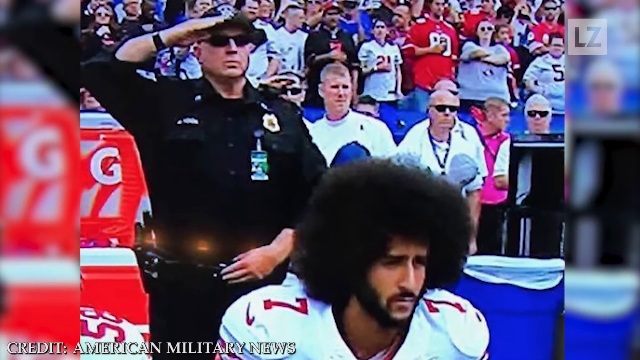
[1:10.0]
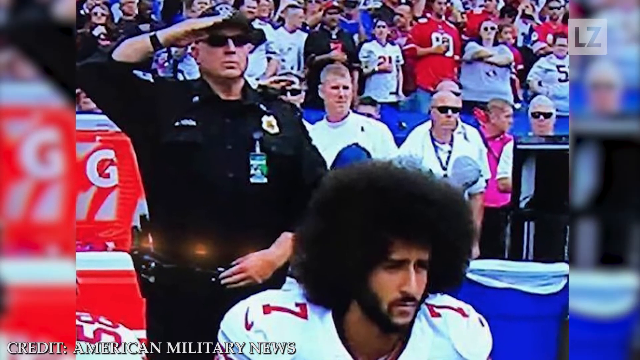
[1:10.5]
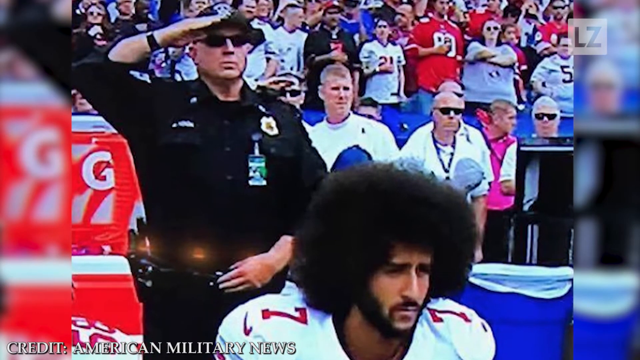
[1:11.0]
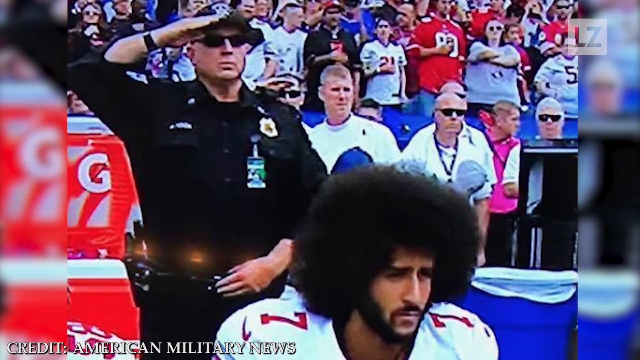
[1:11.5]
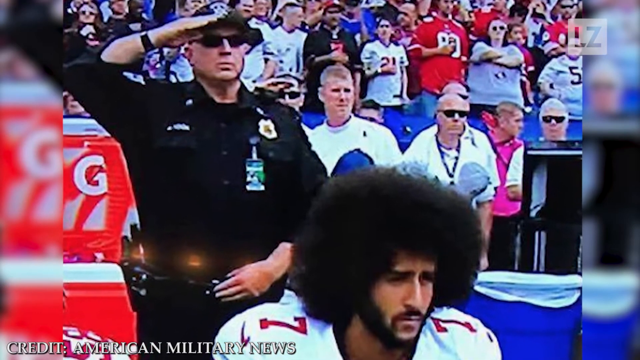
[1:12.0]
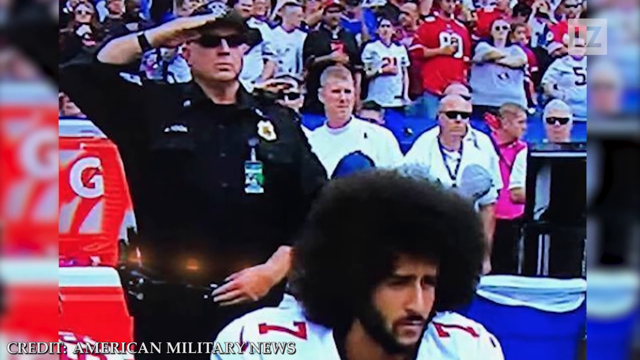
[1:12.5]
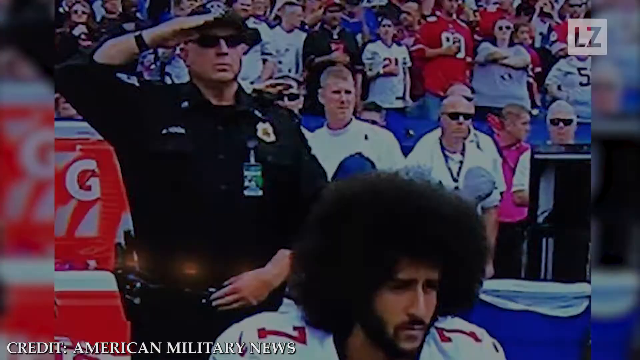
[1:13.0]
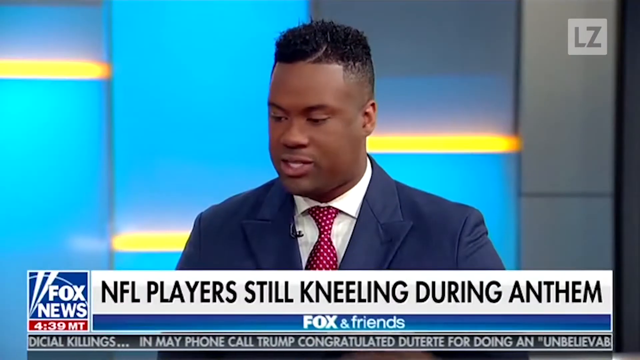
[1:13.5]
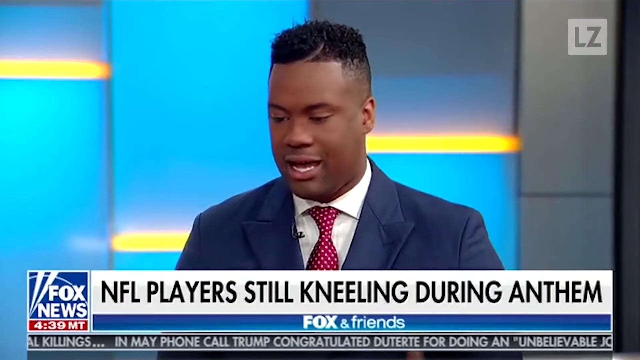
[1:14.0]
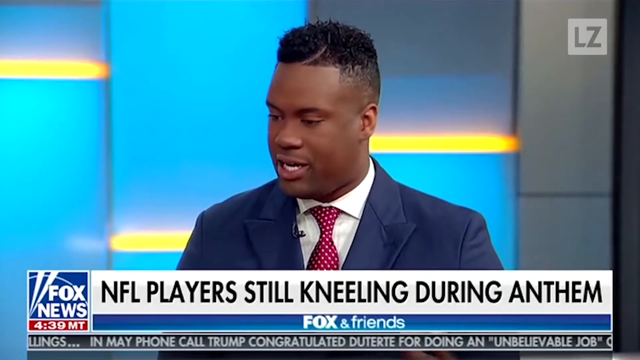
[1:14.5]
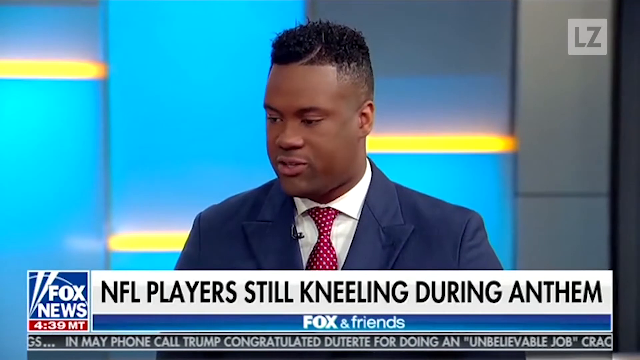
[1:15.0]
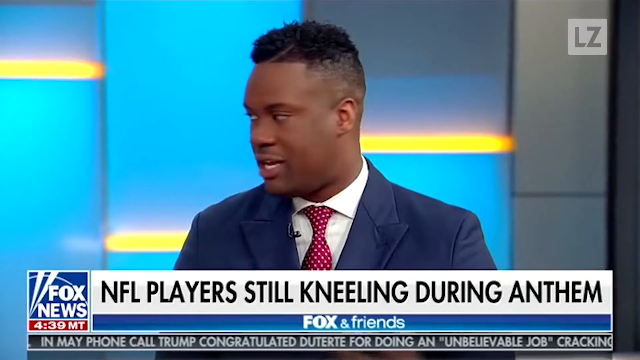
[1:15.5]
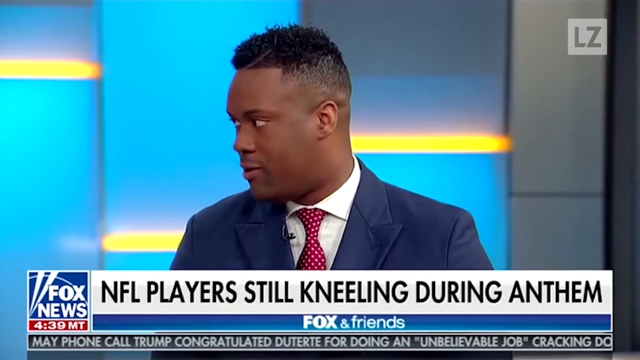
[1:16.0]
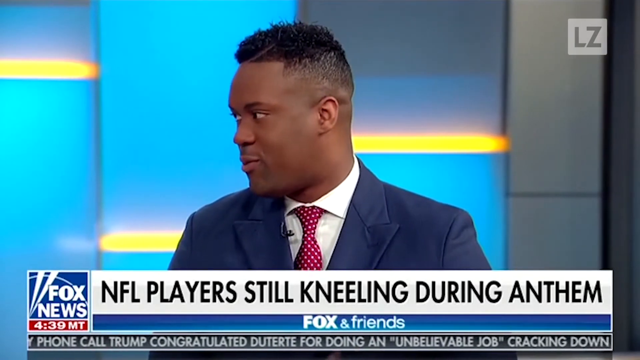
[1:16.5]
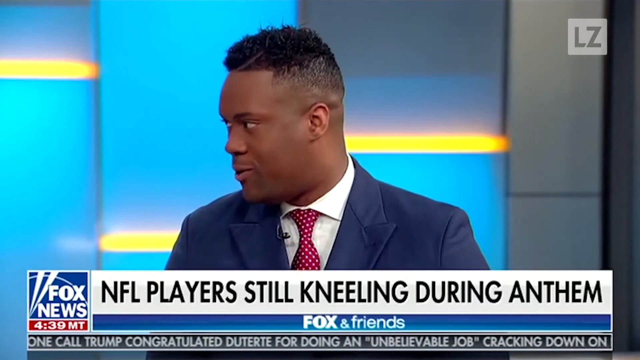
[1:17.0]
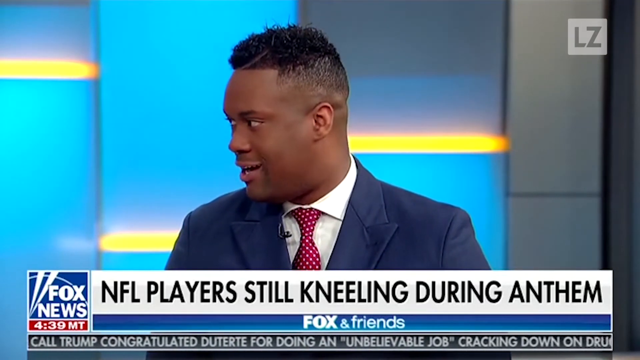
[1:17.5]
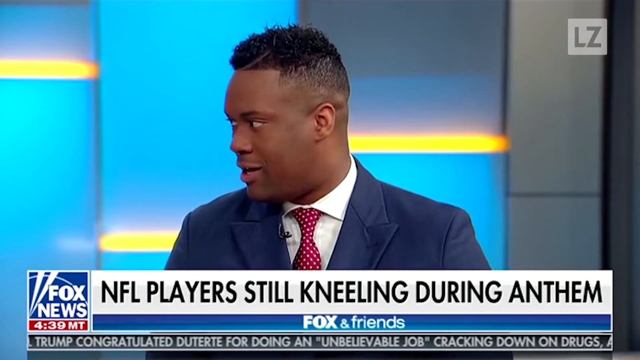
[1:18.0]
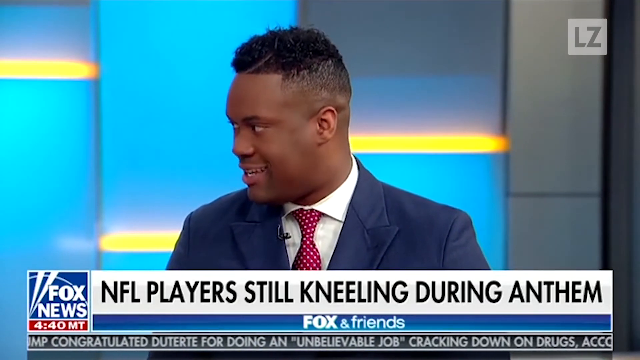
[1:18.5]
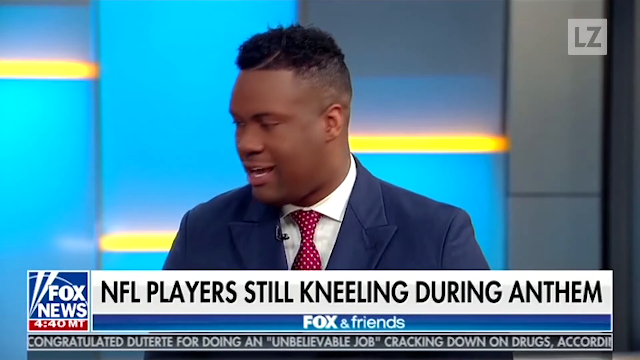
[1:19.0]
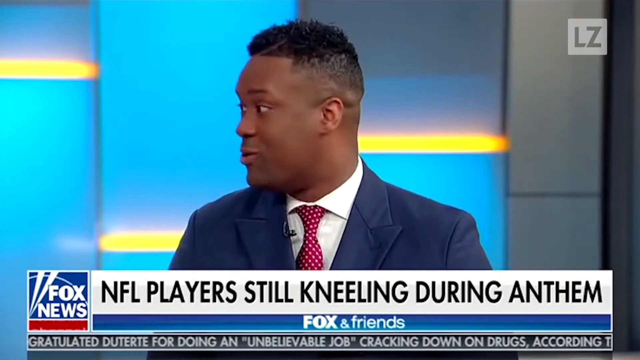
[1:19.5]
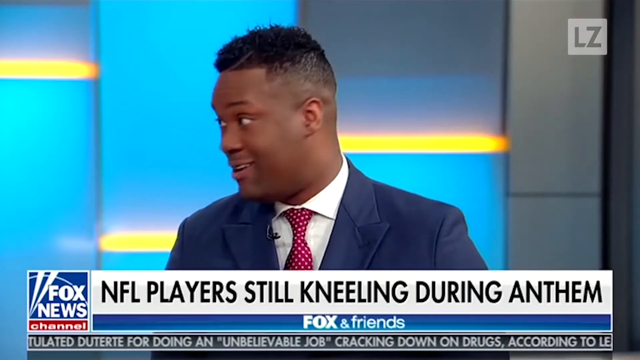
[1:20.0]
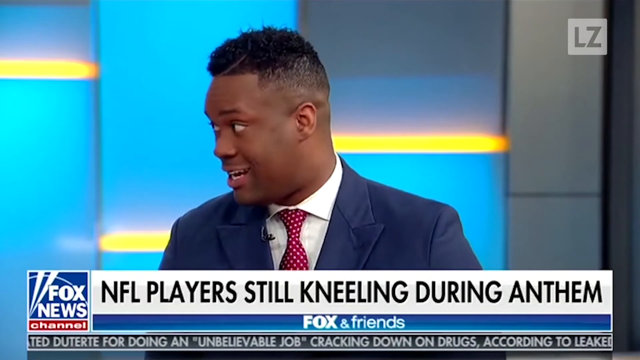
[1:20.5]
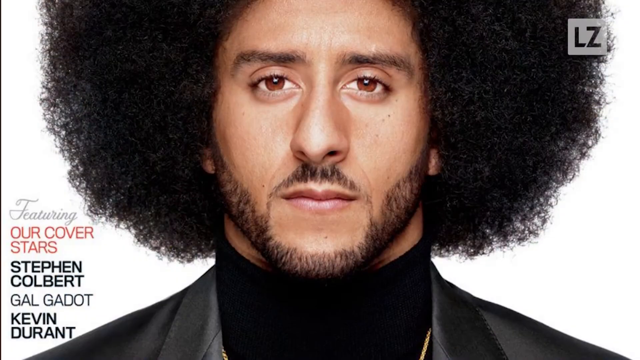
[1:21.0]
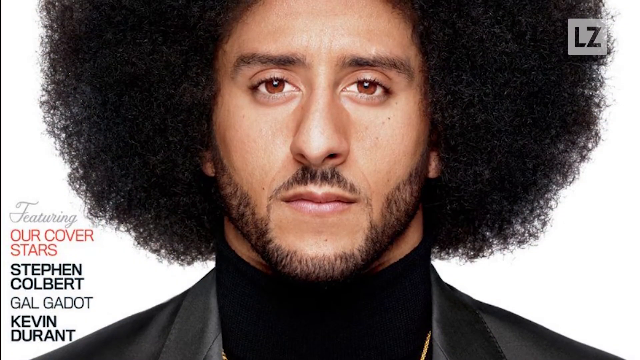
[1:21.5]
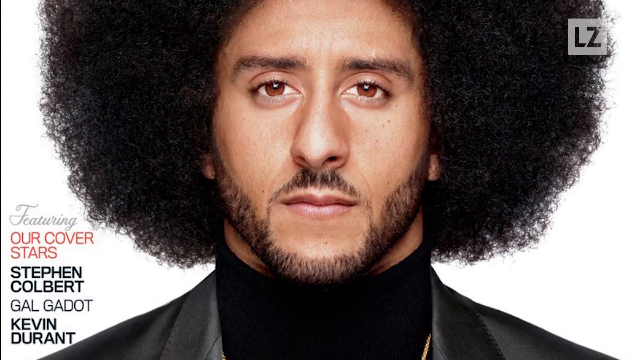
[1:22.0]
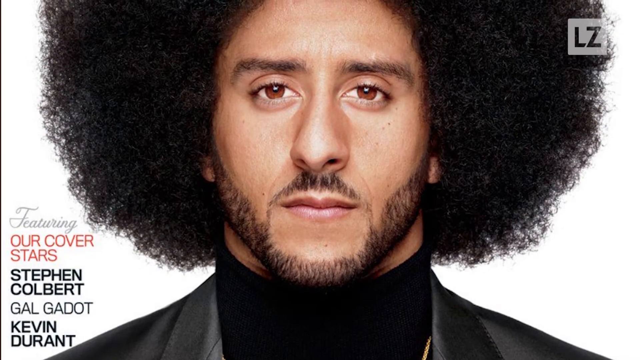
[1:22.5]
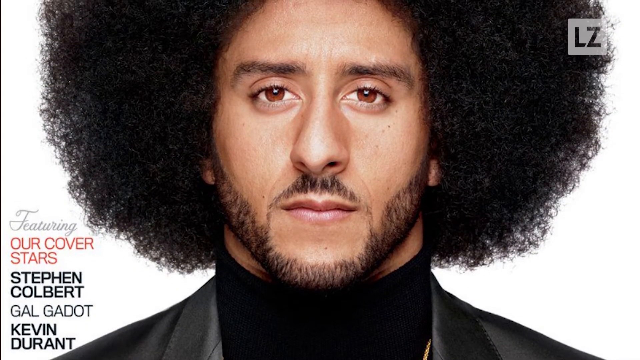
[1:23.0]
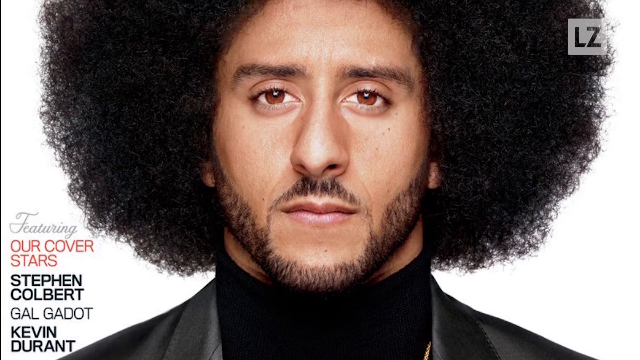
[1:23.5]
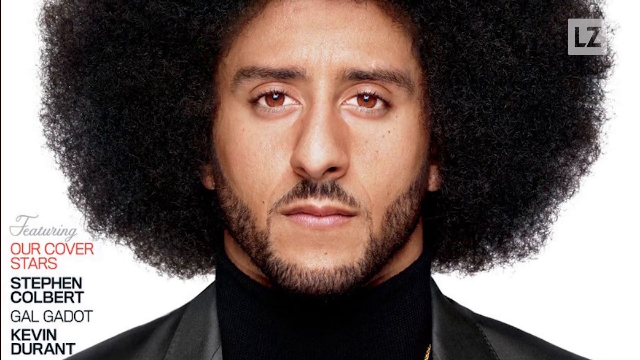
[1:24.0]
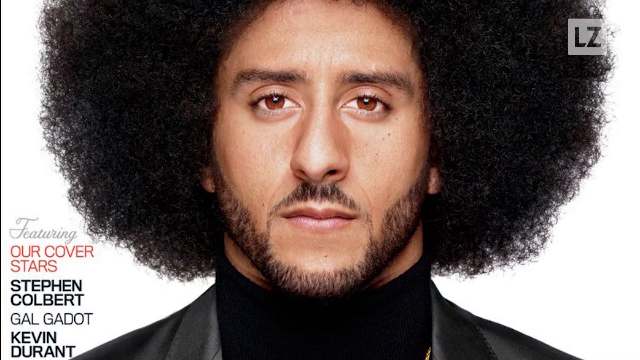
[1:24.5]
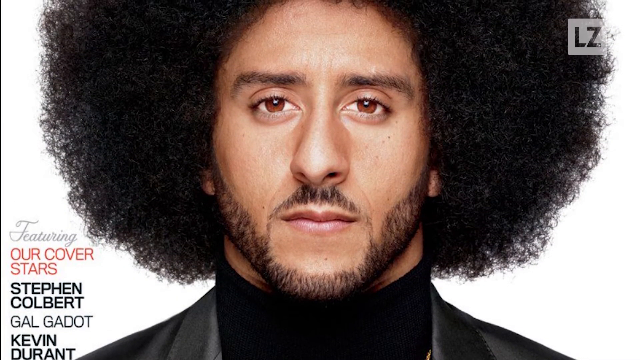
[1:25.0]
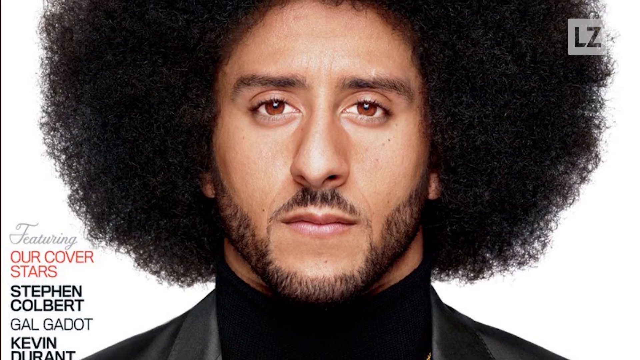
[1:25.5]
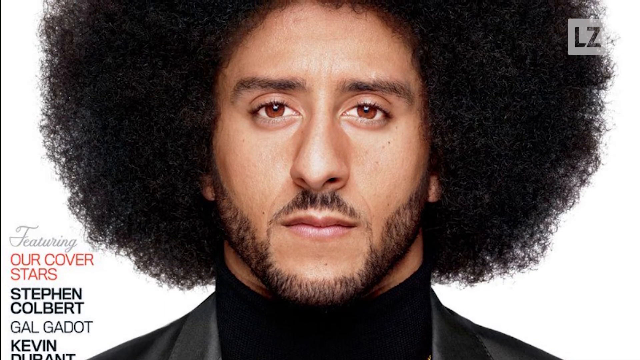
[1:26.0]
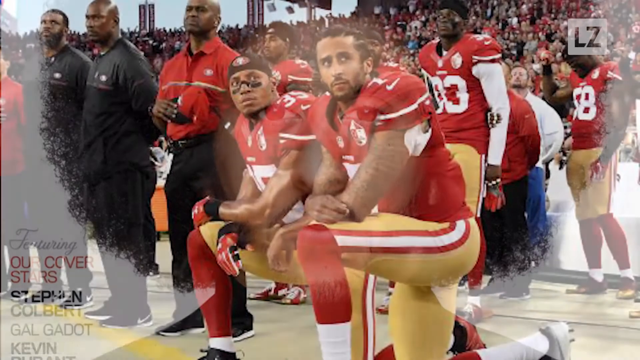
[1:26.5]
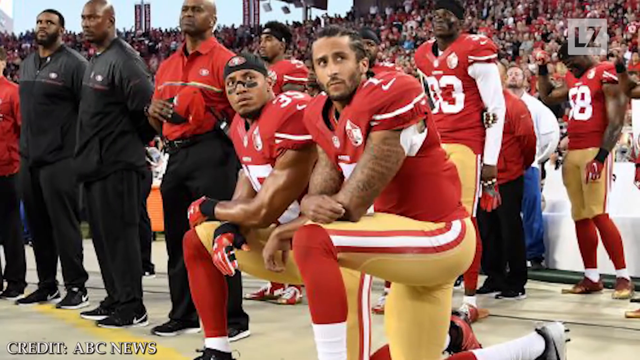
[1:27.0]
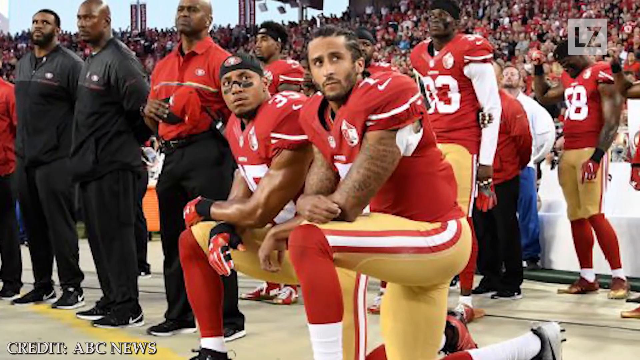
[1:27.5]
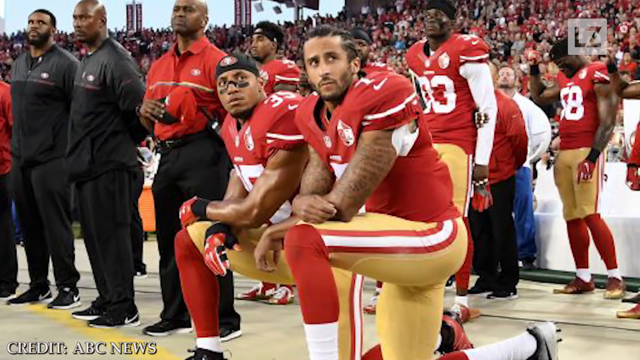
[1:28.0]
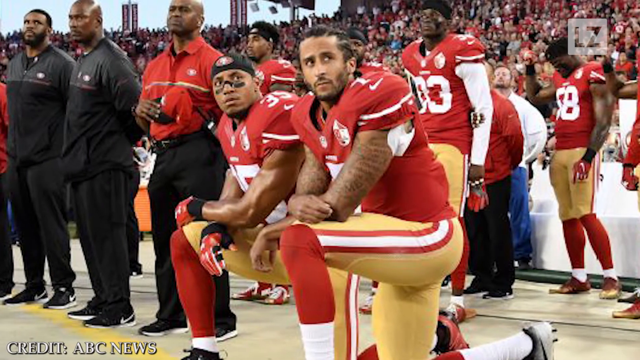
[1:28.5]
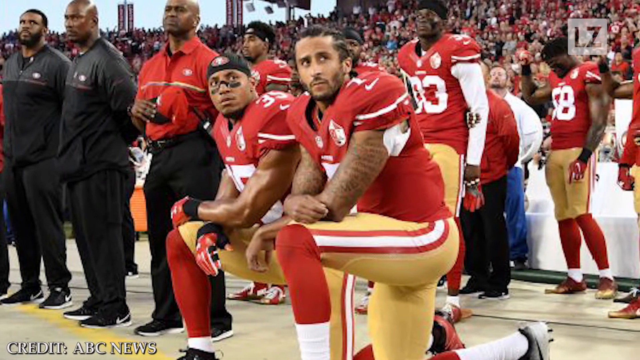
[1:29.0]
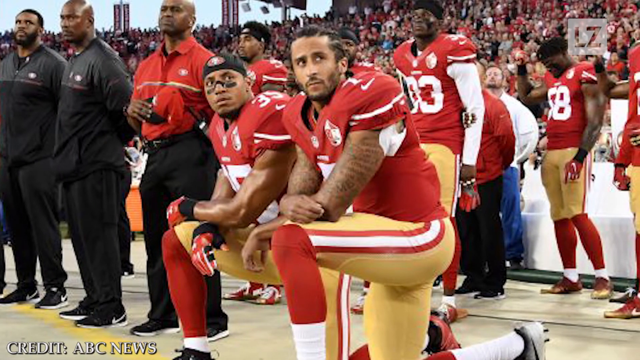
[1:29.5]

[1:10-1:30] A police officer in a black uniform salutes on the ground, his hand raised to his forehead. Colin is sitting on the pitch in a white uniform, with afro hair. A man being interviewed in a newsroom then appears, with text reading "NFL players still kneeling during anthem". He is a black man in his late 30s with short hair, wearing a navy blue suit, a white shirt and a red tie. The background behind him is blue with yellow lines. At the bottom is written "Fox and Friends", and to the left "Fox News". A picture of Colin pops up again, his face on the page, facing the camera; he has a brown beard and a brown afro and wears a black jacket and a black polo neck t-shirt. Video on the rugby pitch follows, showing players wearing red, yellow and white, and men in black and red tracksuits in the back.